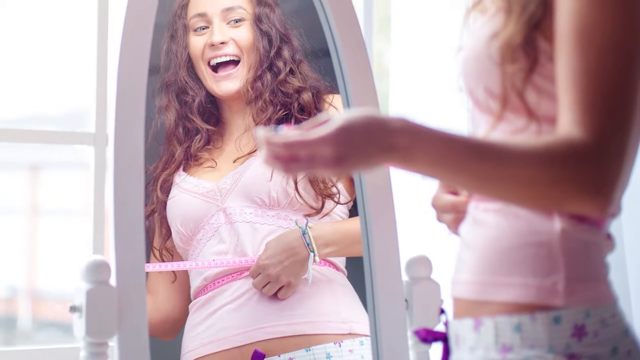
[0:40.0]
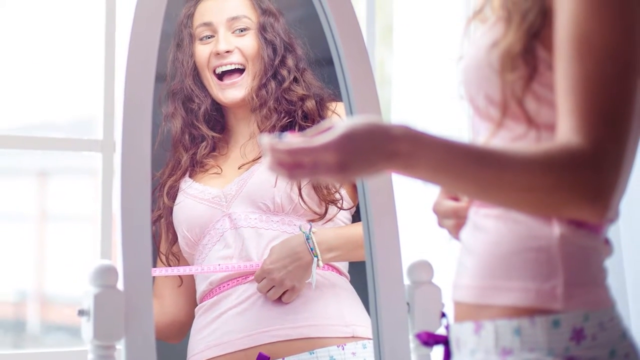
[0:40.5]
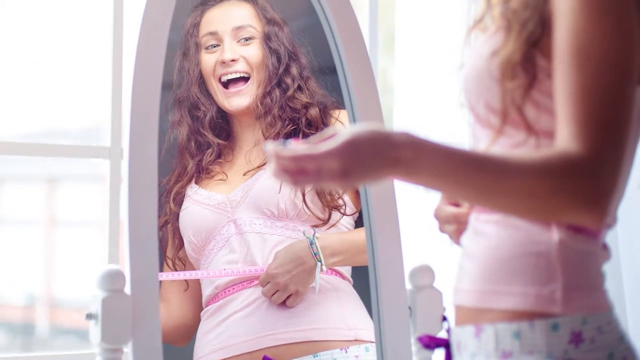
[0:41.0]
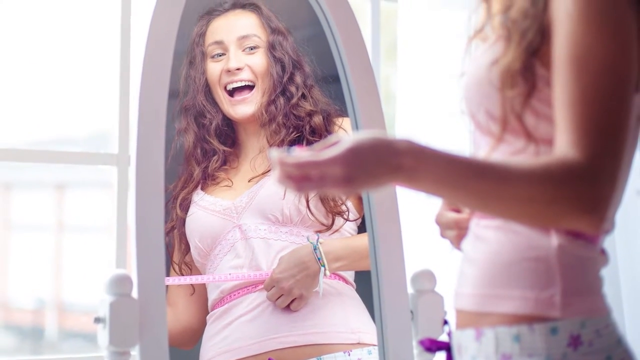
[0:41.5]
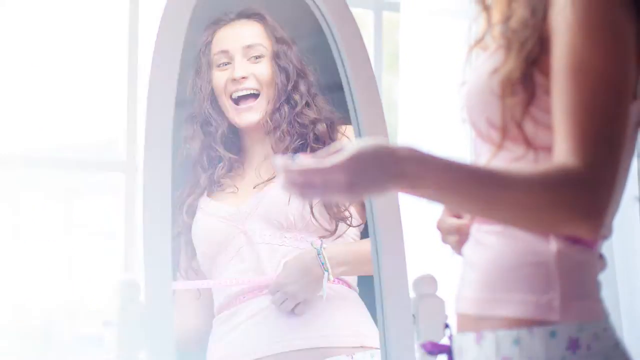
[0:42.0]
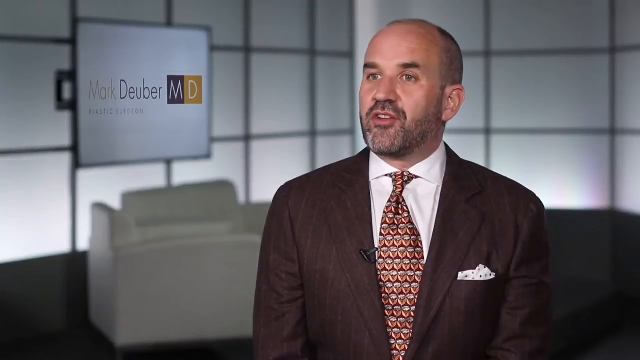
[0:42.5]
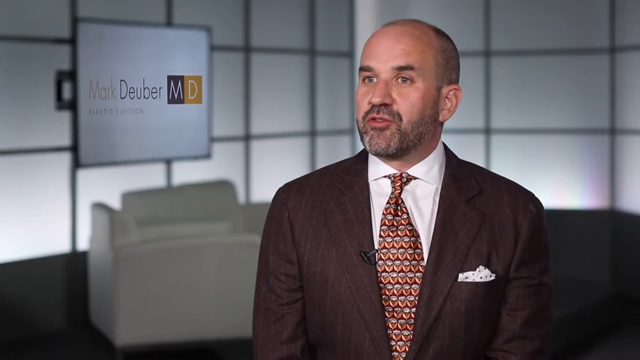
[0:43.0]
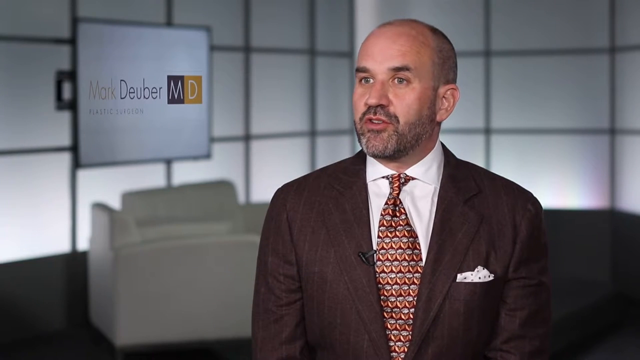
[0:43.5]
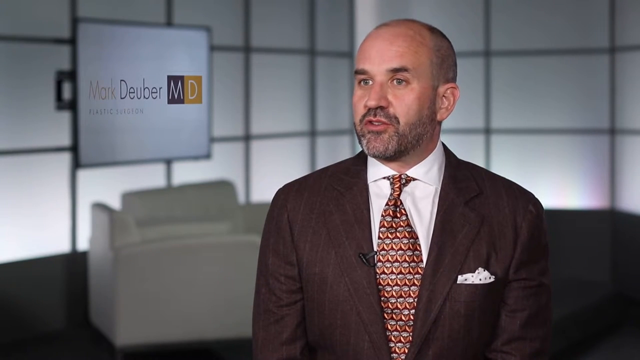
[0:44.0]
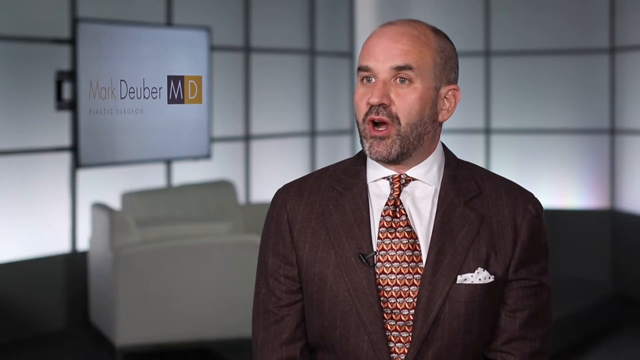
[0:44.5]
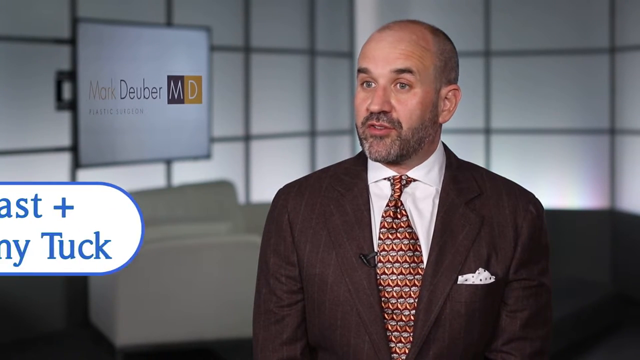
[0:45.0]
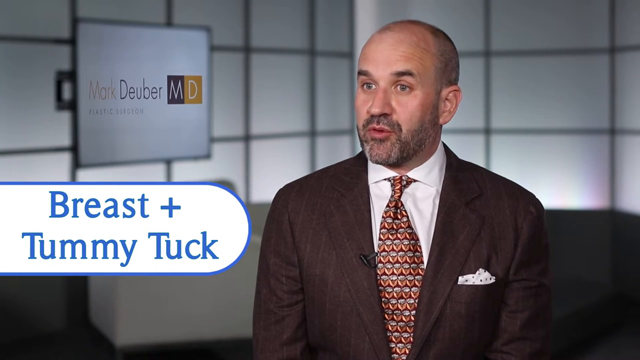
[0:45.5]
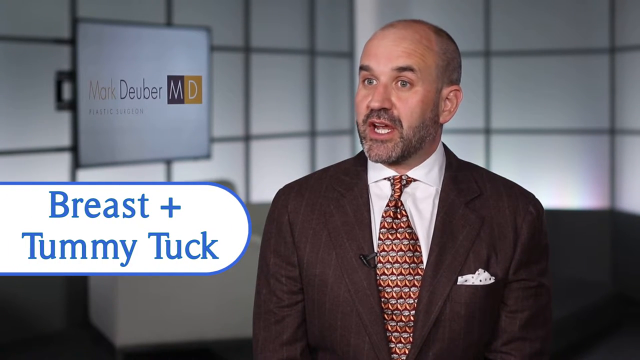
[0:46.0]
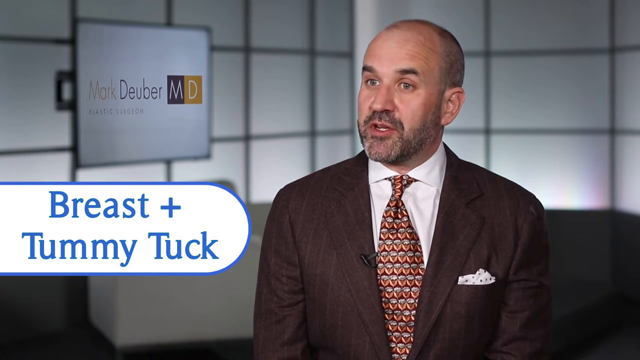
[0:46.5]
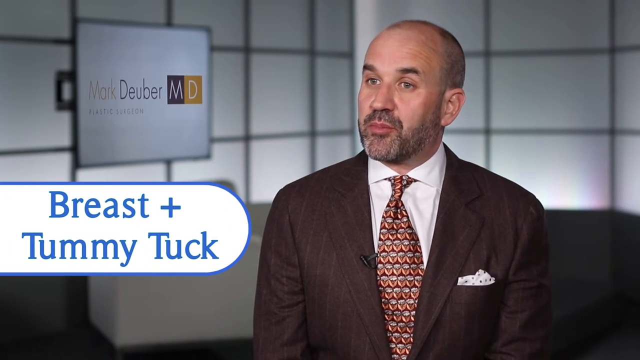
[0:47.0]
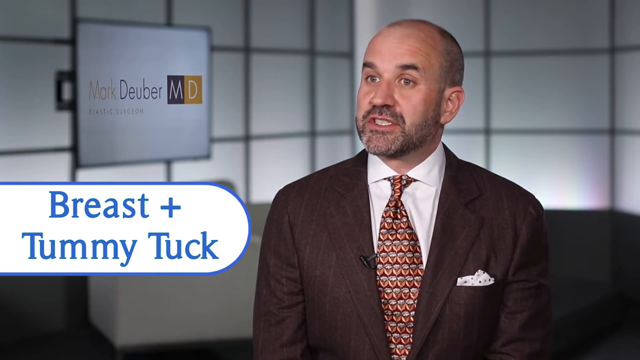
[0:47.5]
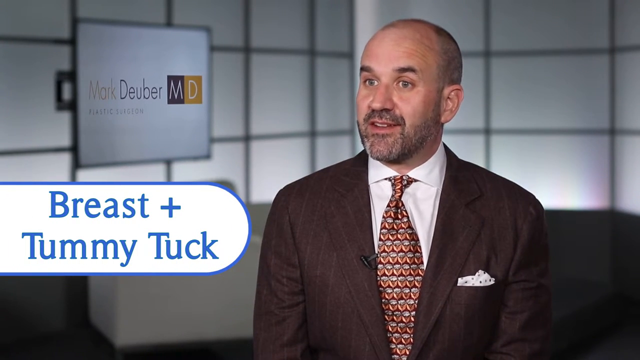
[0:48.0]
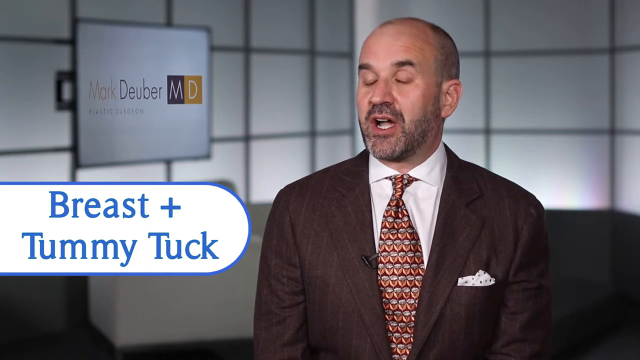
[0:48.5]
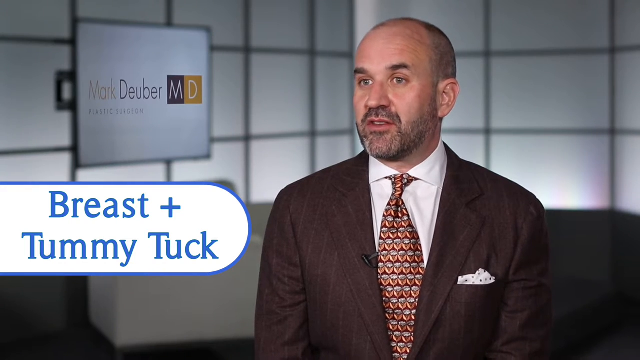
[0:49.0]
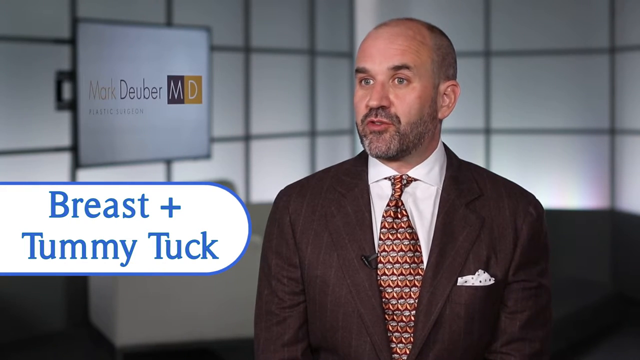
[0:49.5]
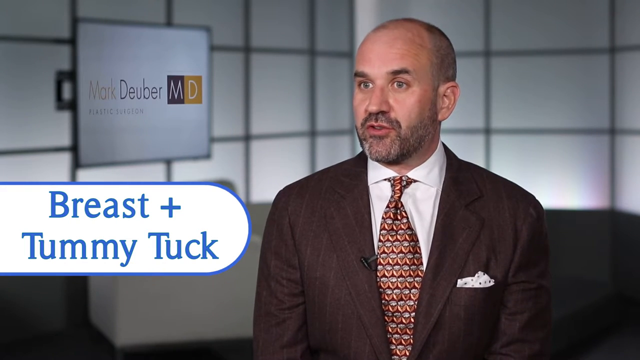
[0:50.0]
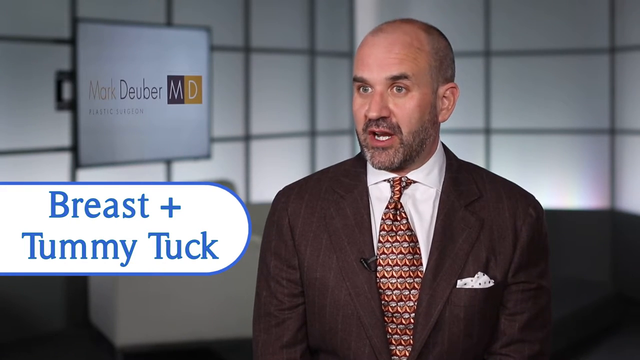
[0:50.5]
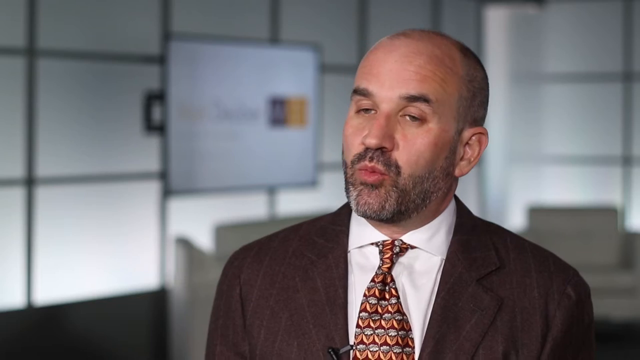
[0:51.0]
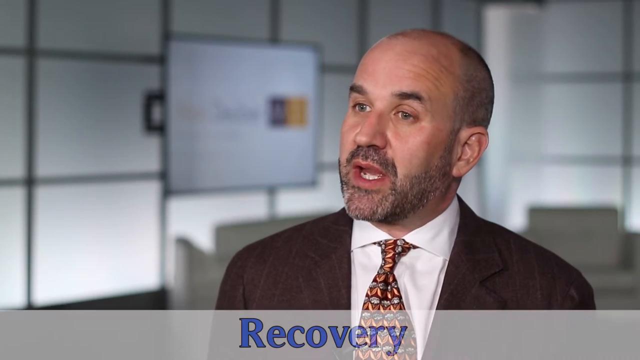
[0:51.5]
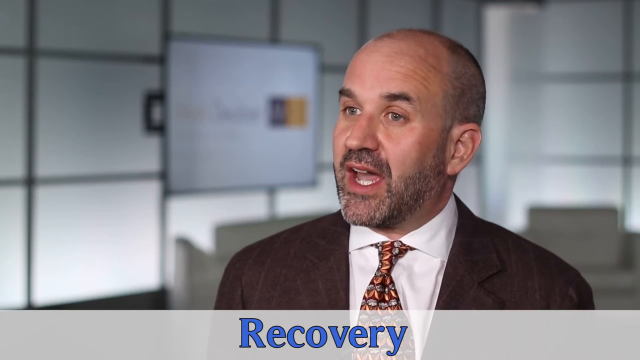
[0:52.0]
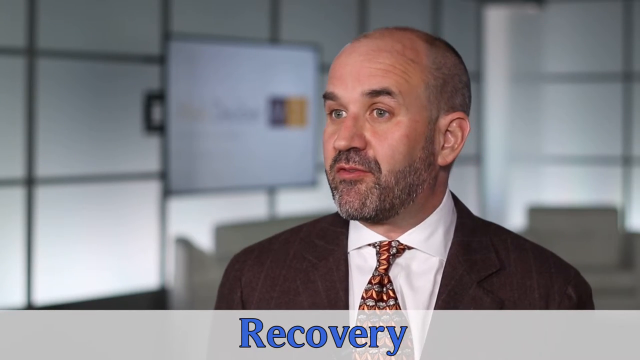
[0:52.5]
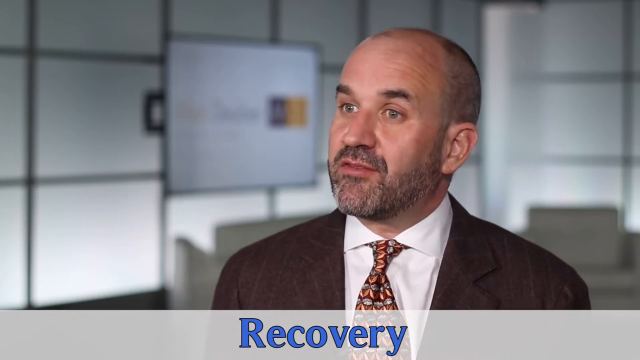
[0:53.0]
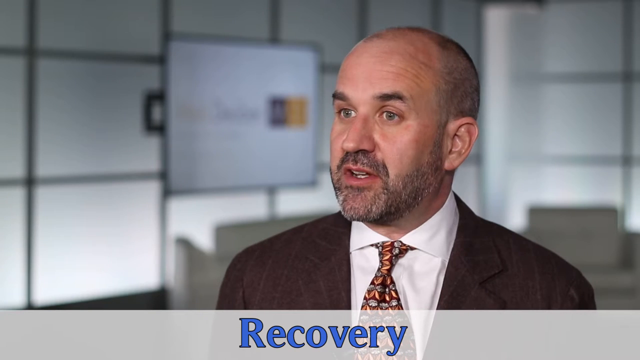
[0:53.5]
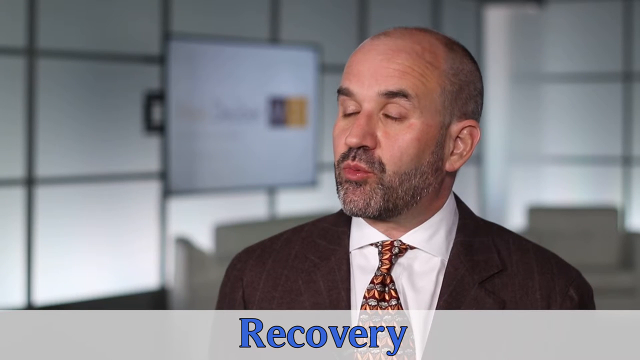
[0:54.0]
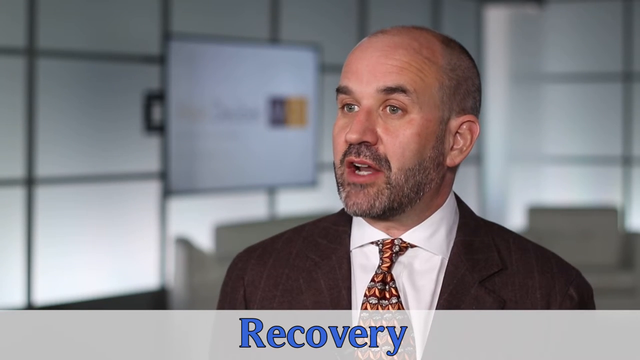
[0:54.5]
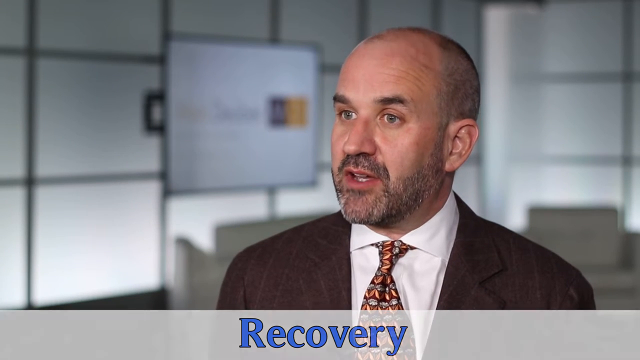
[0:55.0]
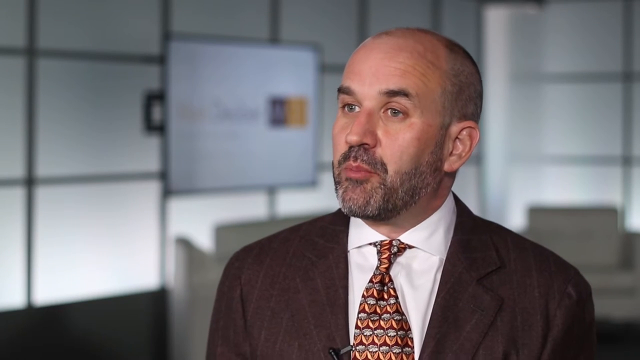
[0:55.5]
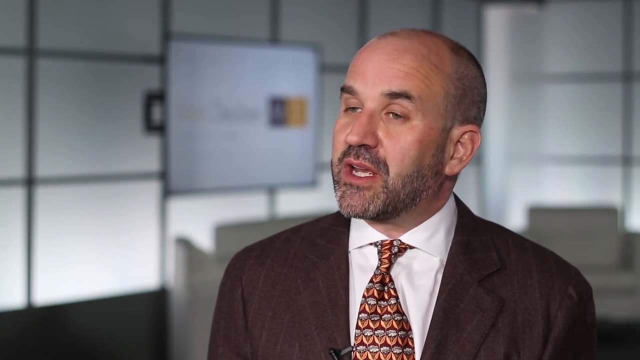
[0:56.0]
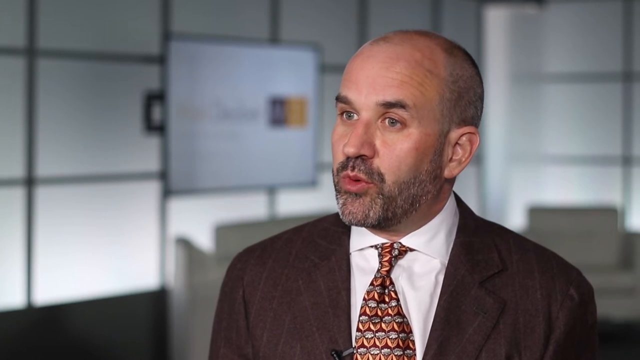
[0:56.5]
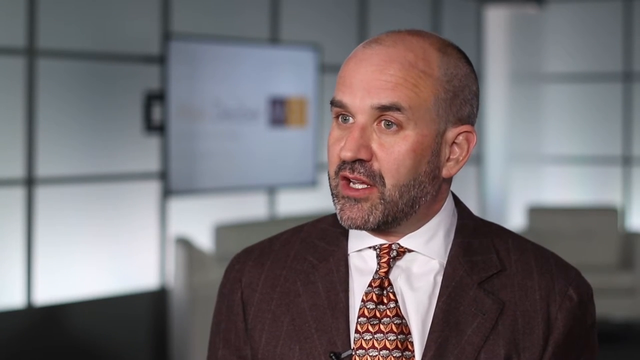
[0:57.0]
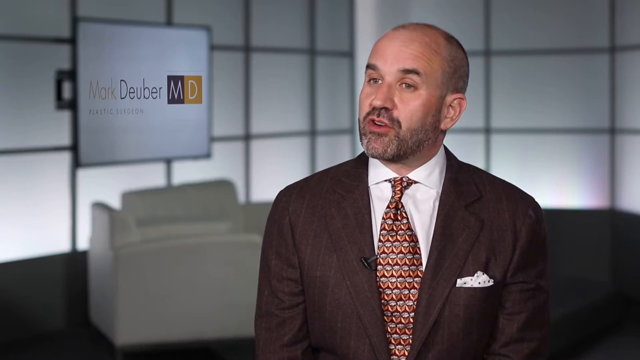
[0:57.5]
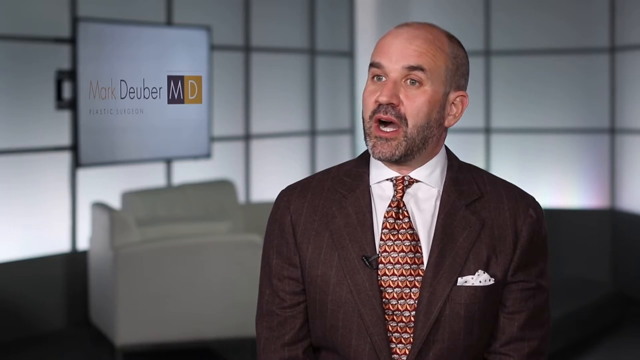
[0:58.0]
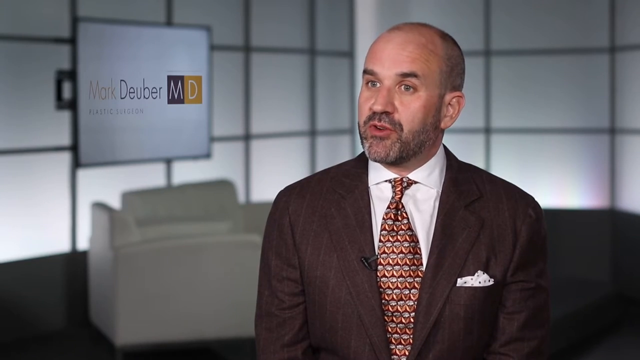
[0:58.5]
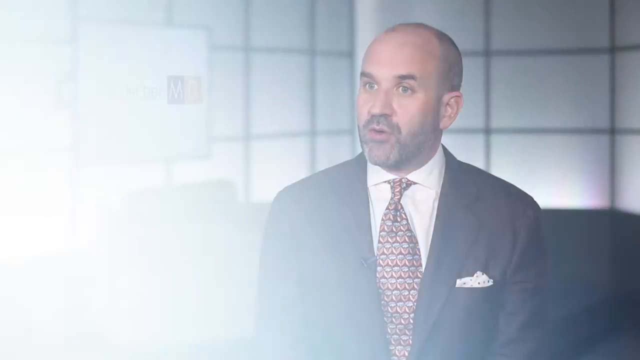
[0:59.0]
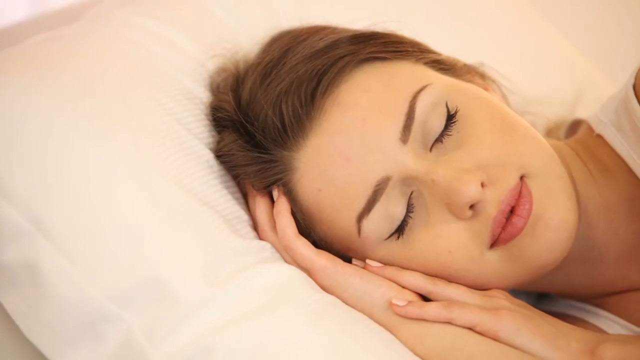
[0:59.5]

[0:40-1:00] A still image shows a woman standing in front of a mirror, seen from the hips up. She has long, brown, curly hair and is measuring her waist, with a huge smile visible only in the mirror reflection. The video quickly switches to a man speaking, presumably a doctor. A sign angled on the wall behind him reads "Mark Duber, MD." He wears what appears to be a brown pinstripe suit jacket with a very busy tie whose pattern almost looks like rows of orange and some gray waves, a white collared shirt, and a white handkerchief in his chest pocket. Text comes in from the left reading "breast plus tummy tuck." He keeps speaking, followed by a closer shot of him speaking; he seems very calm. The image then quickly switches to a woman lying in bed, sleeping.